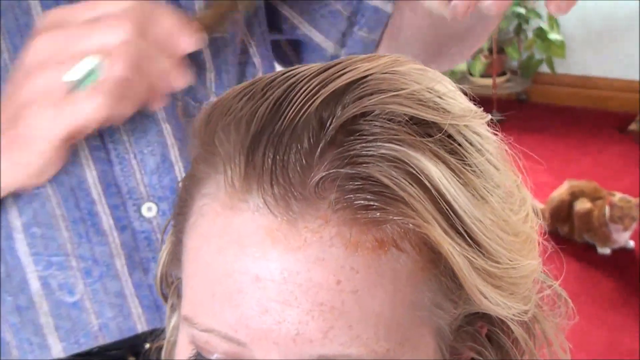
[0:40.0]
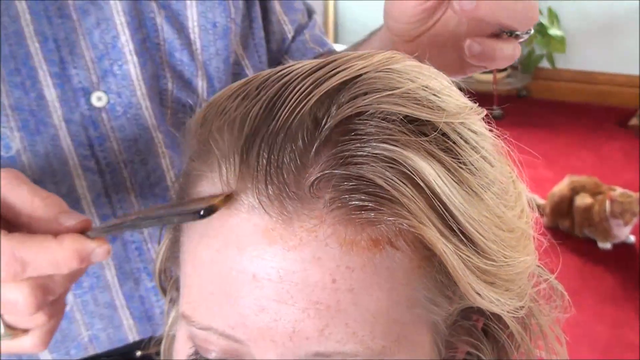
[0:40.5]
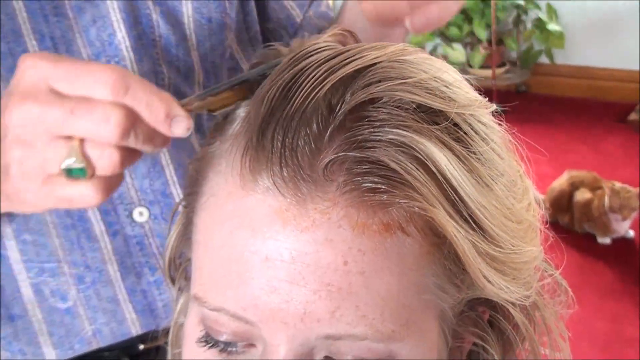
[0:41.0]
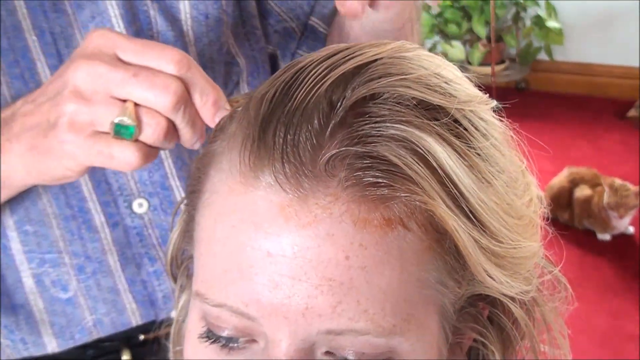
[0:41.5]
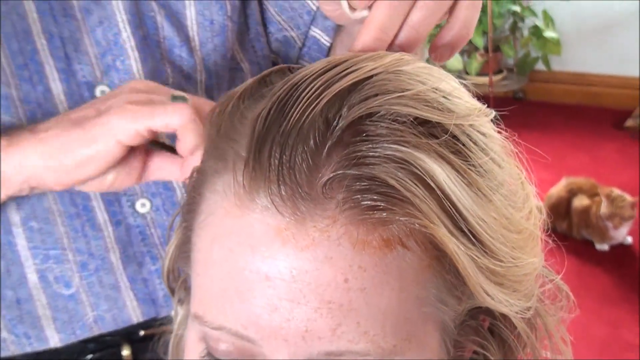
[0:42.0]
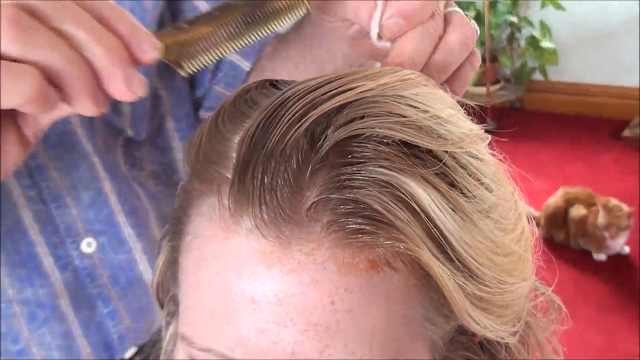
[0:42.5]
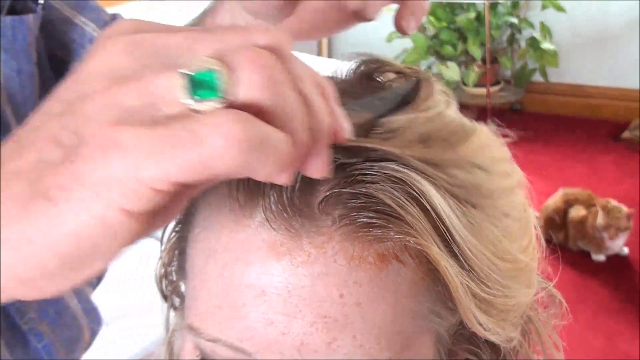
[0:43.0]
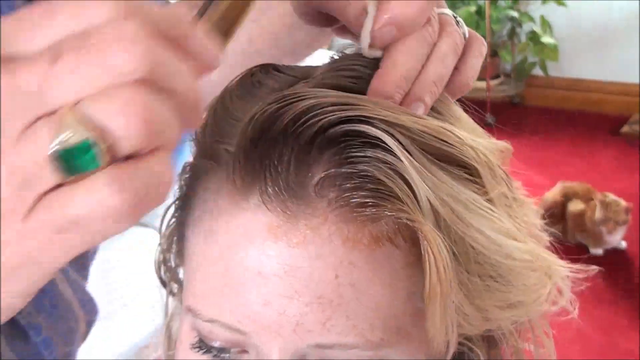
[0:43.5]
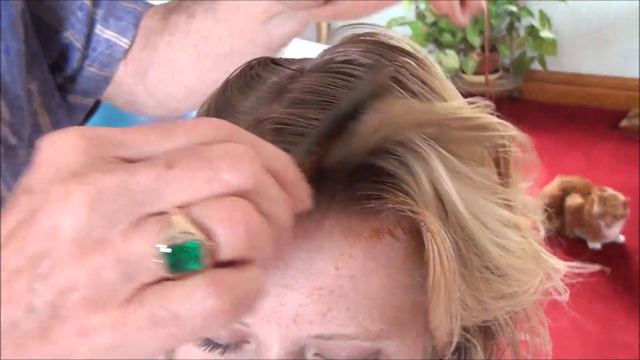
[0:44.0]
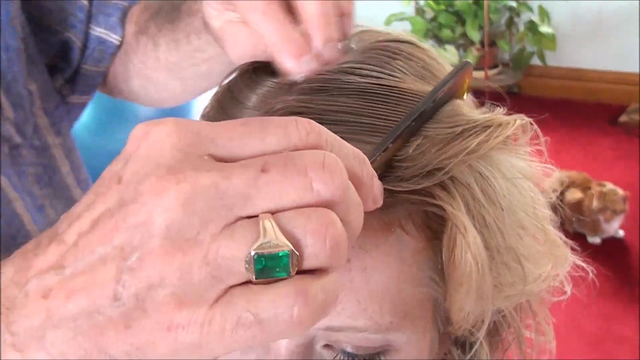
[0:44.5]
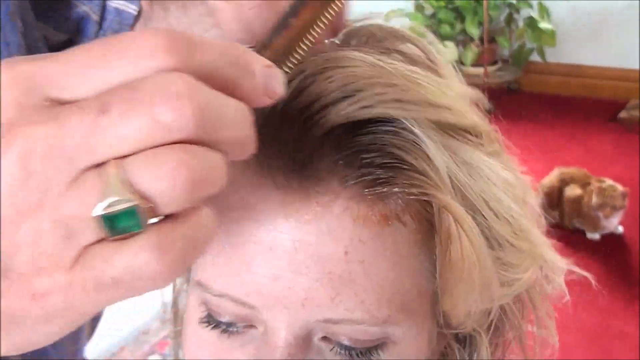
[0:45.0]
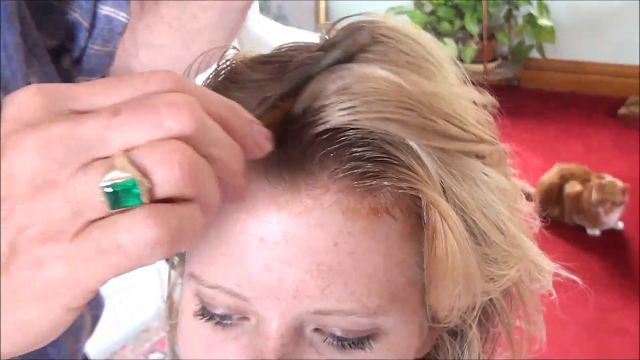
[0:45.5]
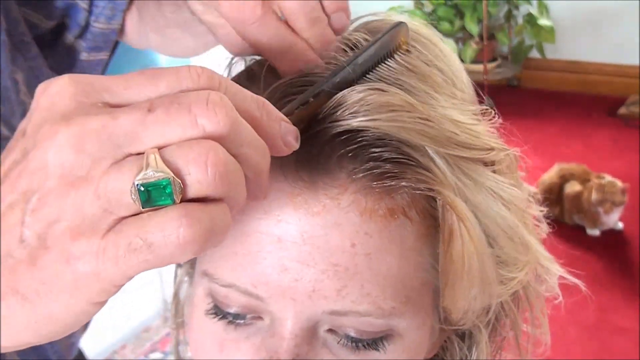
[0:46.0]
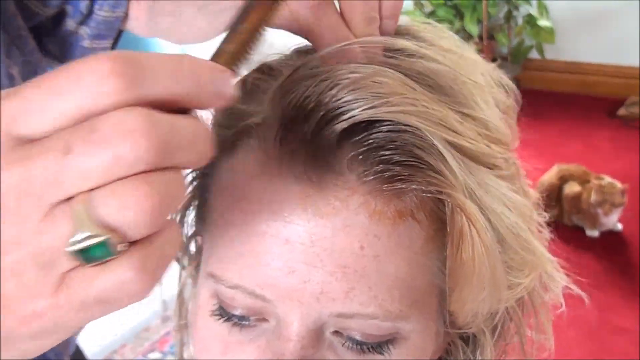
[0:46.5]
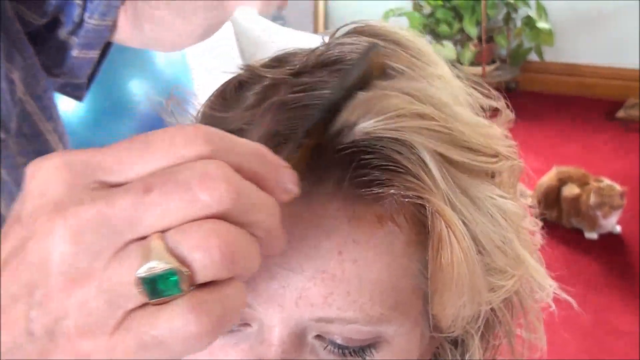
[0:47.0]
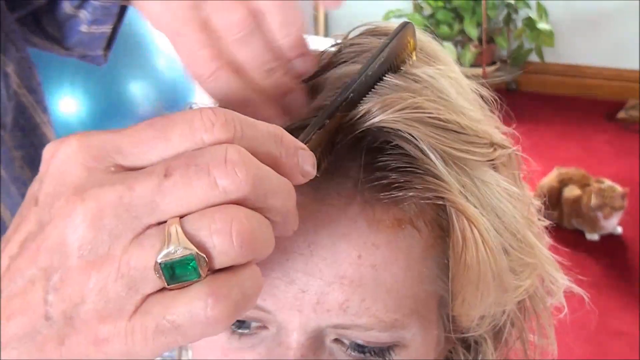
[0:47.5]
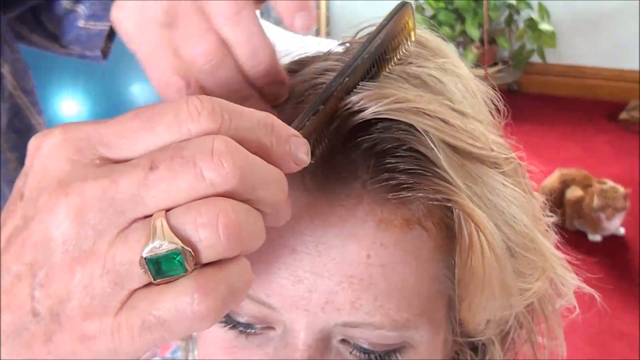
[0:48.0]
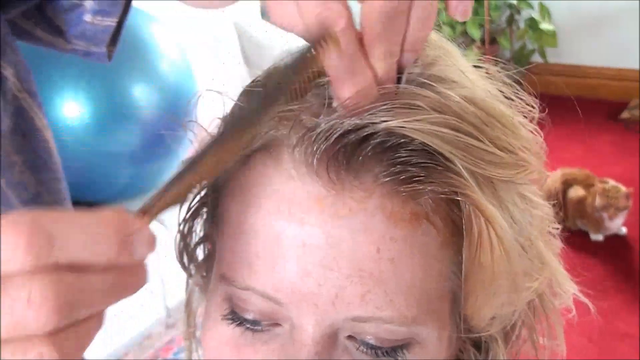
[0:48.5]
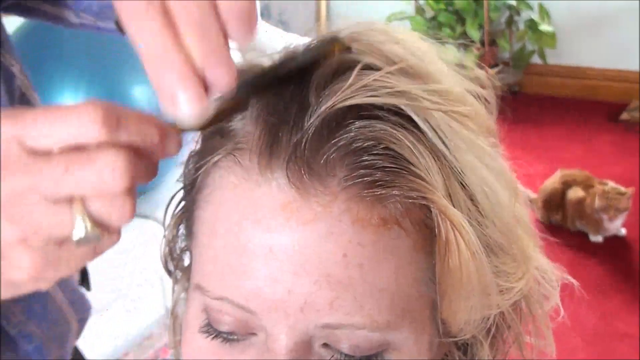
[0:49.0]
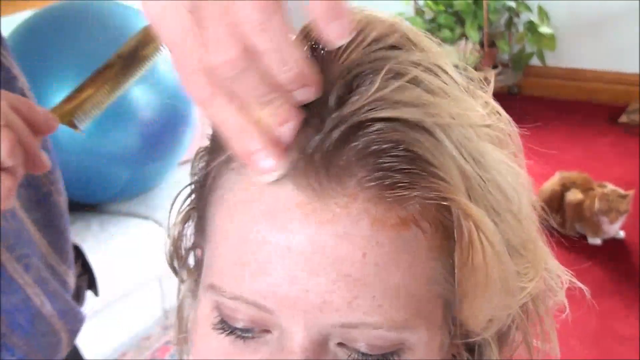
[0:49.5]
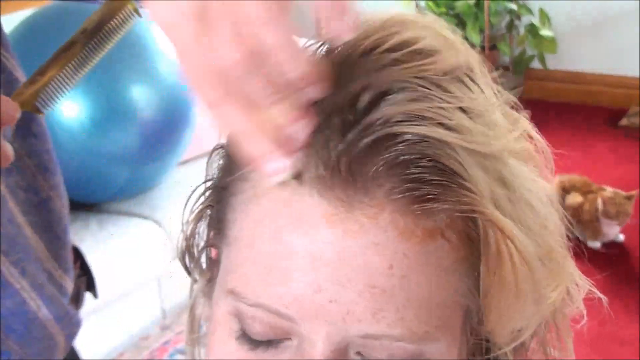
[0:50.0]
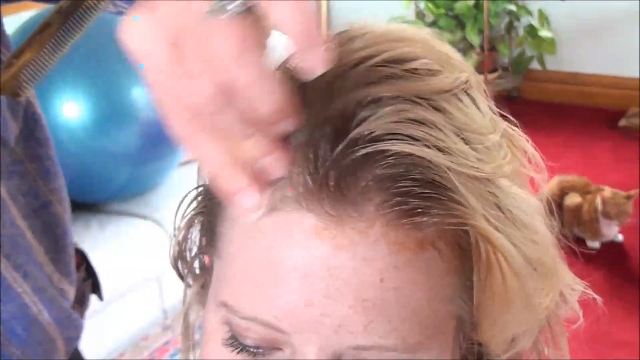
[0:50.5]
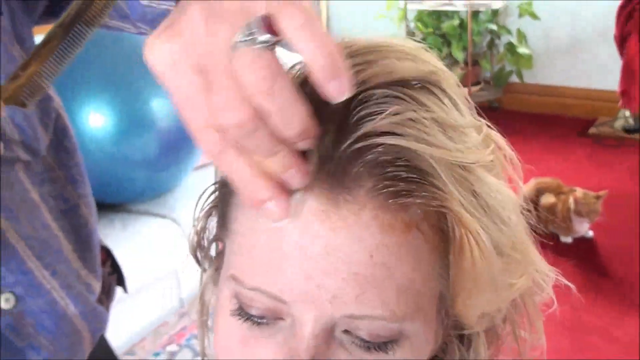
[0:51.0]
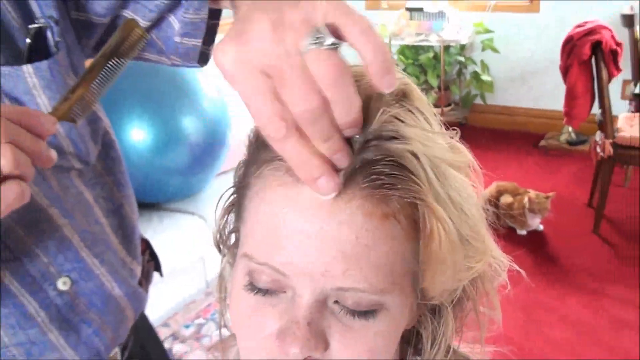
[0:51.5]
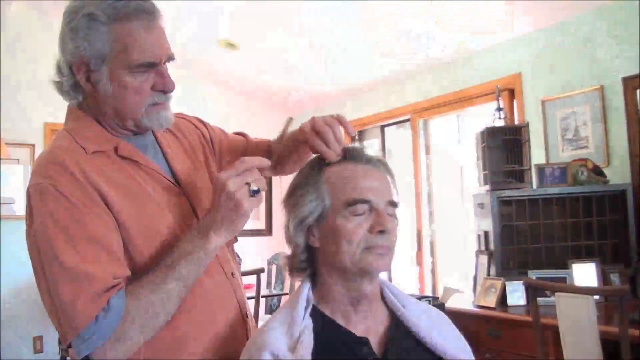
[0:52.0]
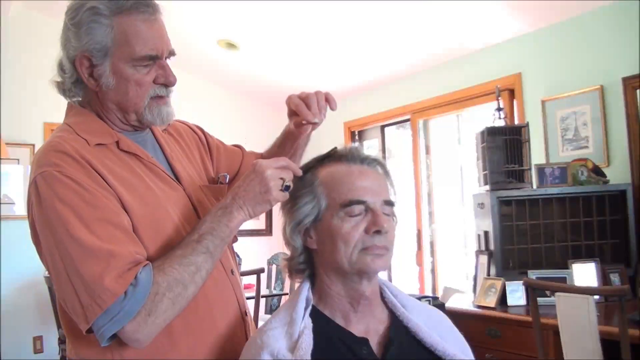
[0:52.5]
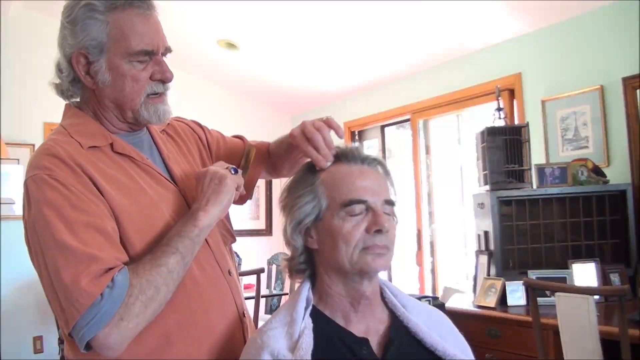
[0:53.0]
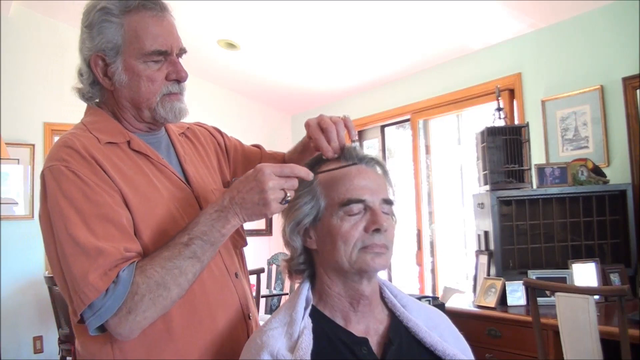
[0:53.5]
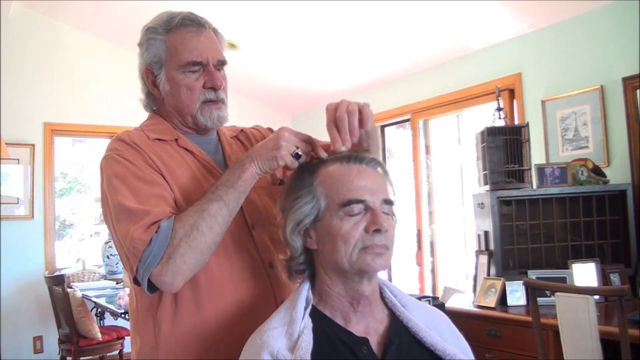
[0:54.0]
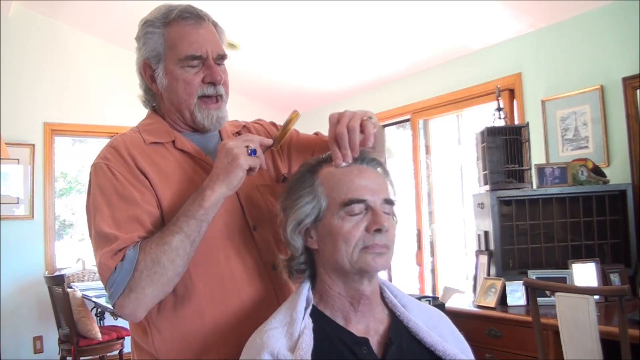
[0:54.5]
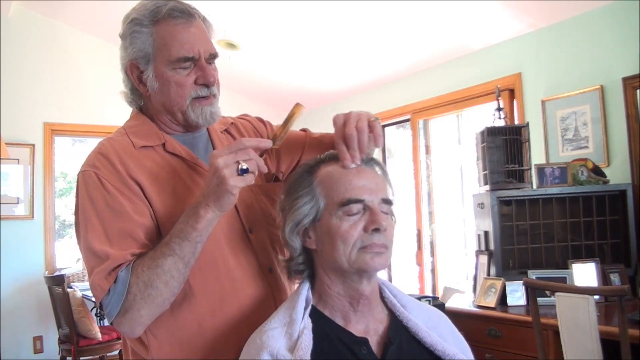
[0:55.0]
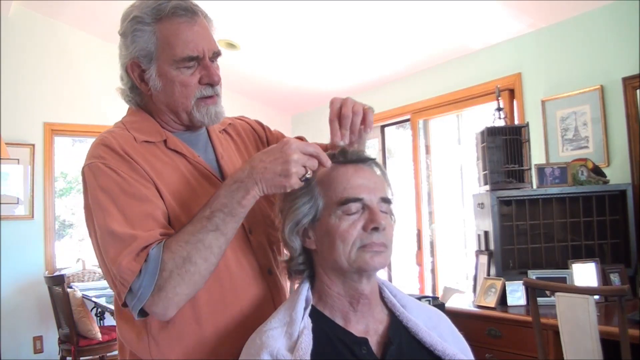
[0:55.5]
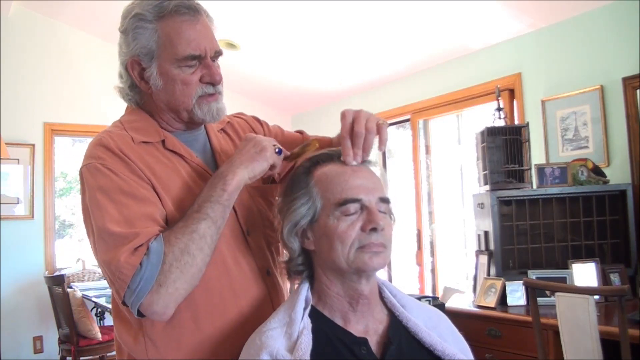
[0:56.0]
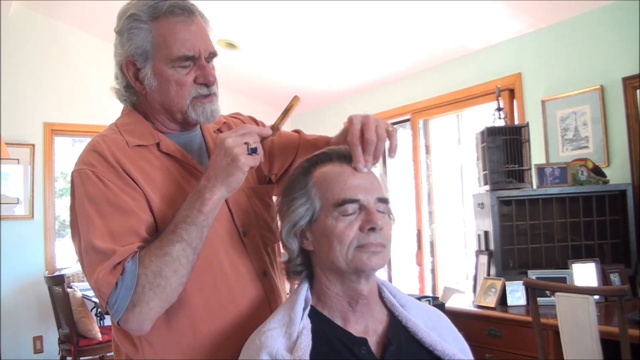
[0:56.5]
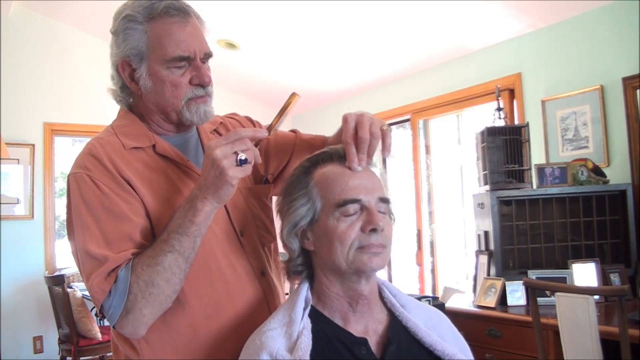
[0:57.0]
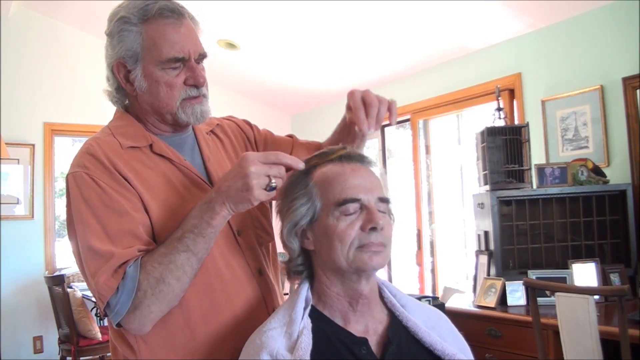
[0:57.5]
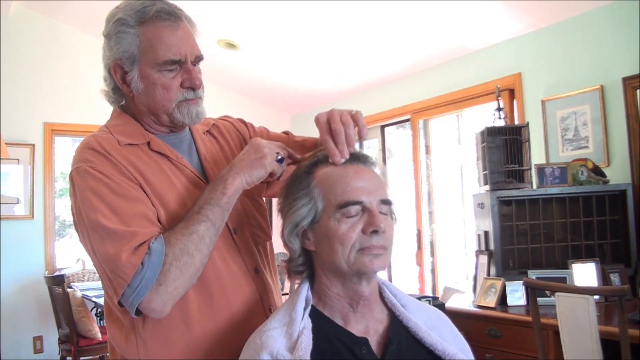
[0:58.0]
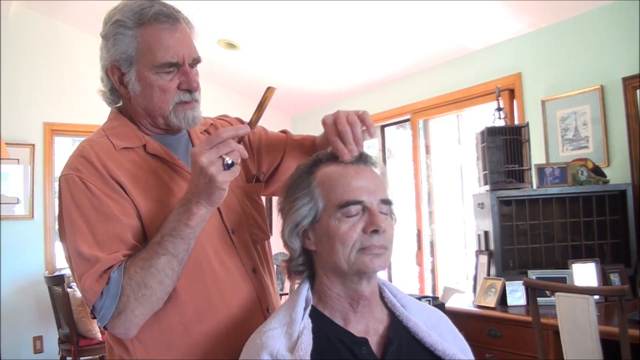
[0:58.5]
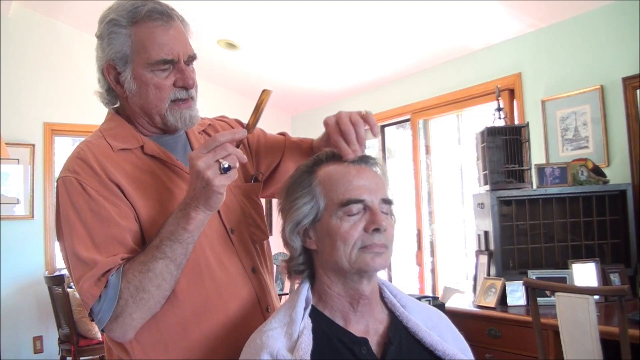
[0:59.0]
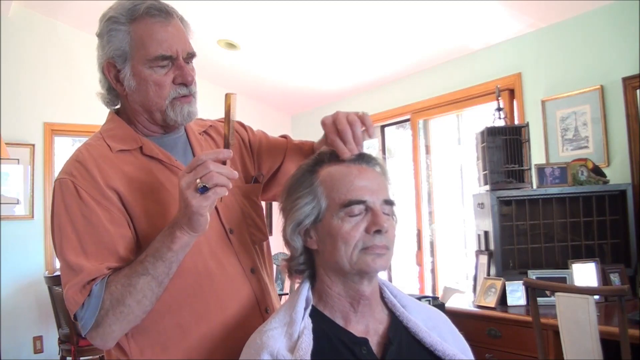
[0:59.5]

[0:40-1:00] The top of someone's head is shown from the forehead up. A person combs the hair, parts it, and rubs each part with some sort of cotton ball. In the background is a cat, an orange tabby with a white belly; its two front paws are visible and are white. There is a red carpet, a plant with green leaves in the background, and a blue ball in the background. As the shot widens, it transitions to a man sitting in a chair, wearing a black shirt with a towel around his shoulders. Another man stands over him, wearing a peach-colored shirt over a gray T-shirt. In his left hand he holds what is perhaps a white cotton ball, and in his right hand a brown rat tail comb. On his right ring finger is a ring that appears to have a silver body and a blue stone. Windows are in the background, one of them open. There is a wooden desk with a chair at it that also appears to be wood, with a light leather backing. The wall in the right background appears to be a green, aqua tint.